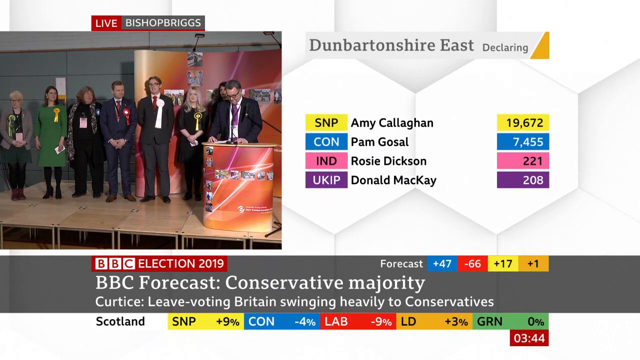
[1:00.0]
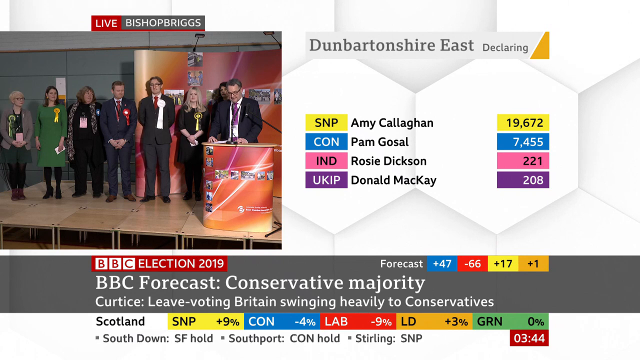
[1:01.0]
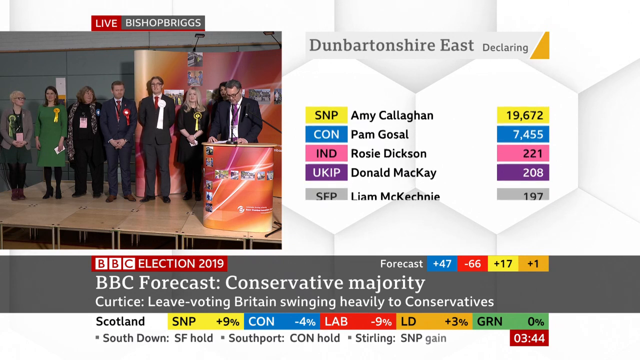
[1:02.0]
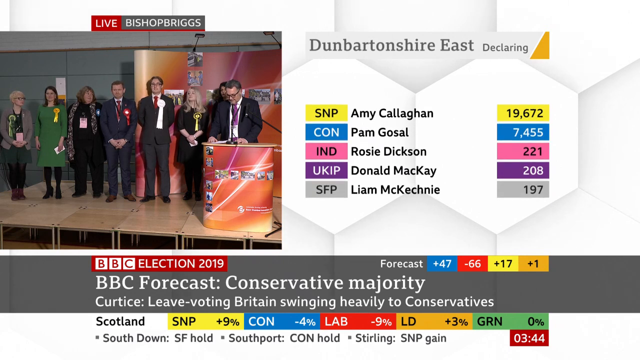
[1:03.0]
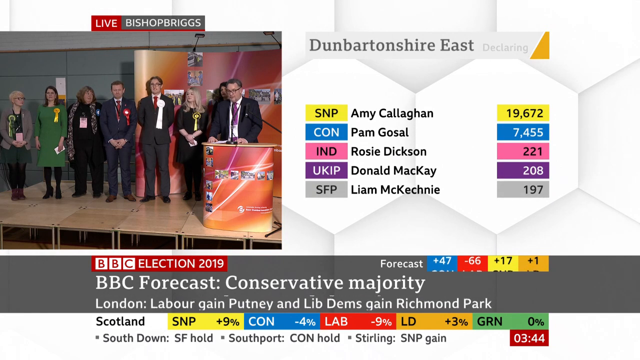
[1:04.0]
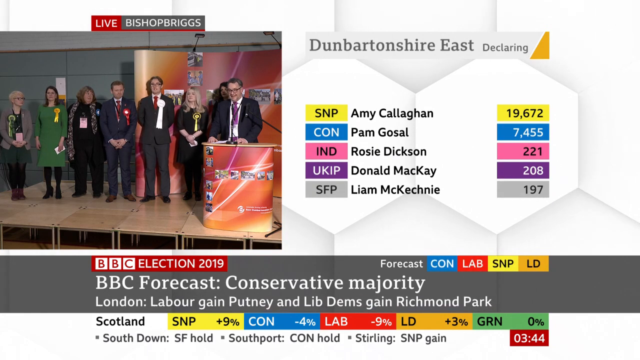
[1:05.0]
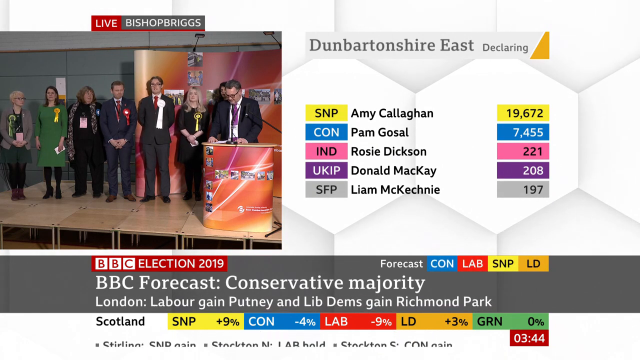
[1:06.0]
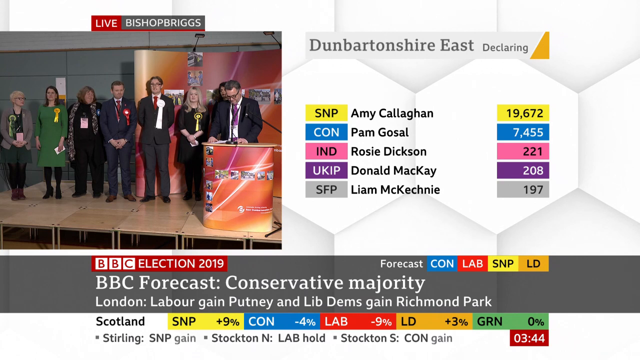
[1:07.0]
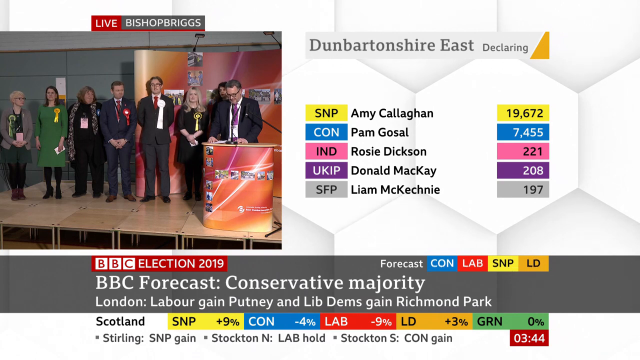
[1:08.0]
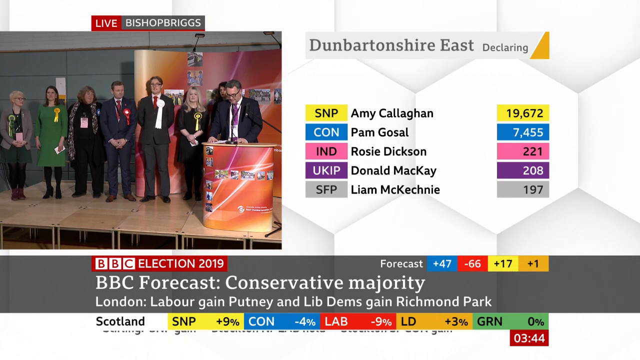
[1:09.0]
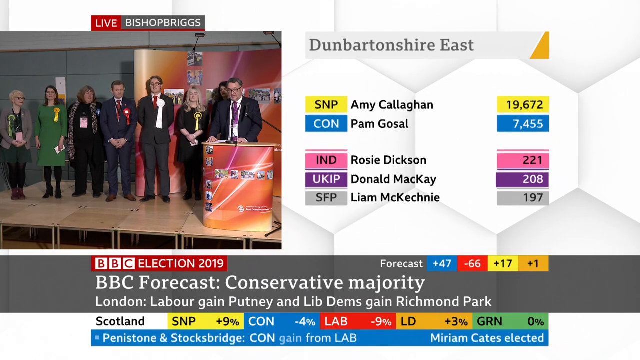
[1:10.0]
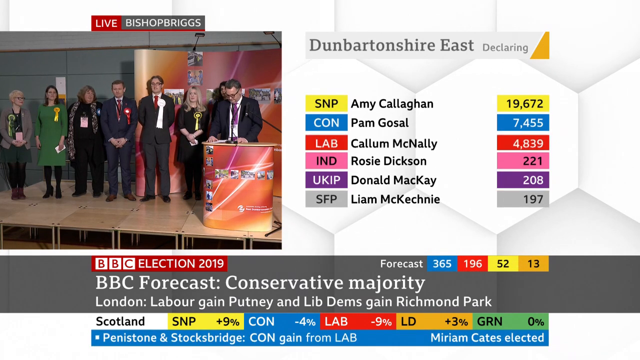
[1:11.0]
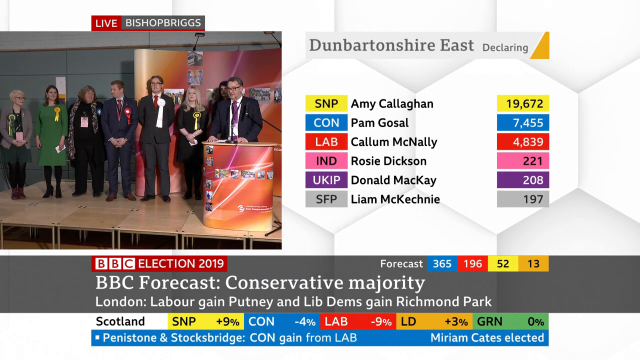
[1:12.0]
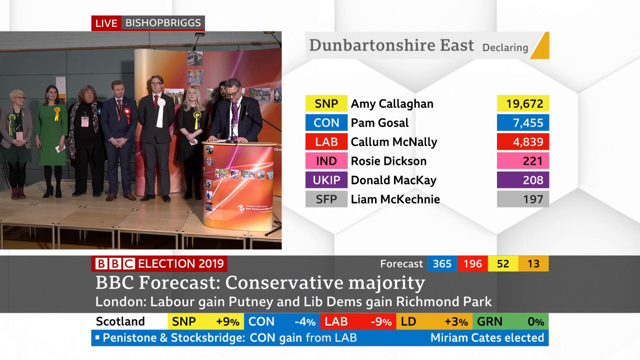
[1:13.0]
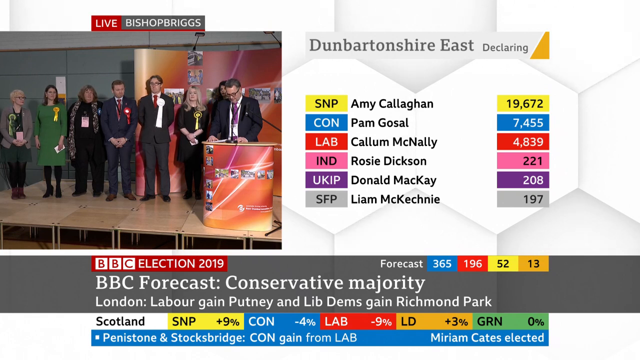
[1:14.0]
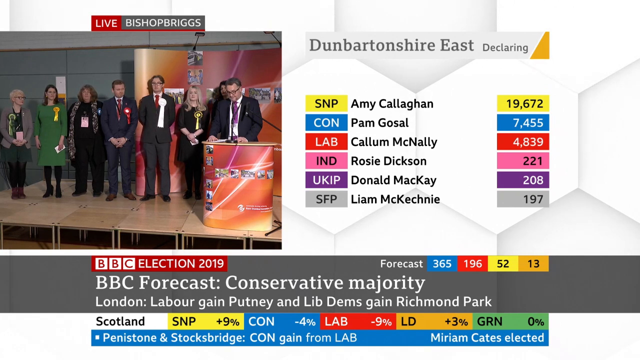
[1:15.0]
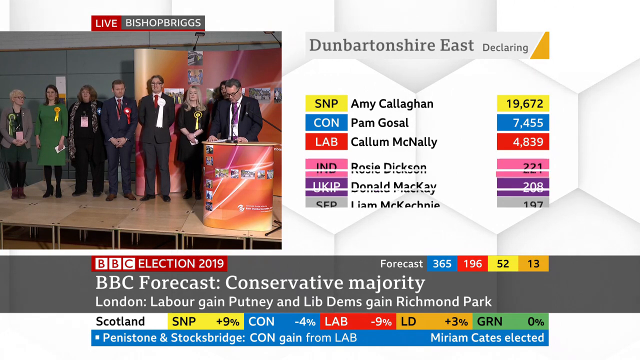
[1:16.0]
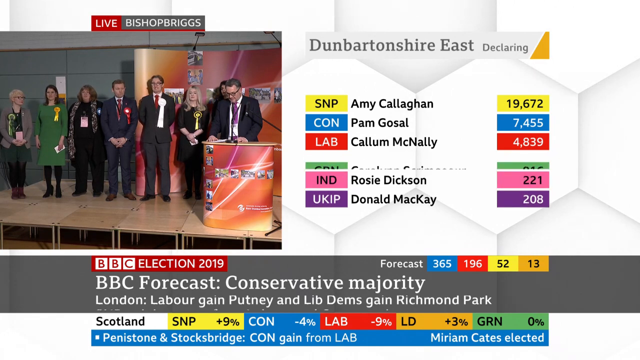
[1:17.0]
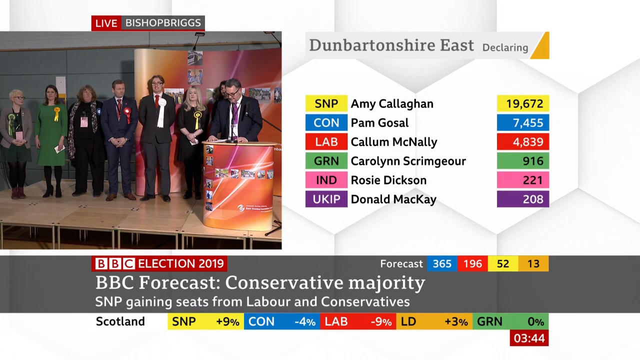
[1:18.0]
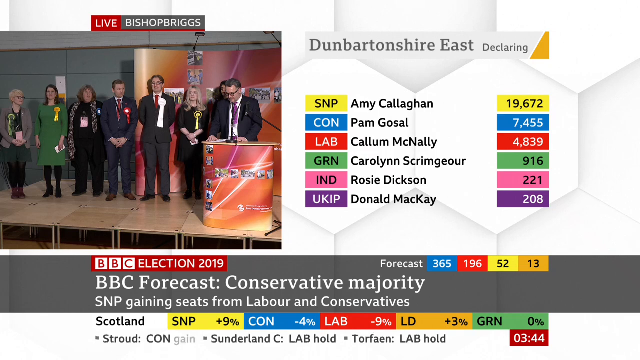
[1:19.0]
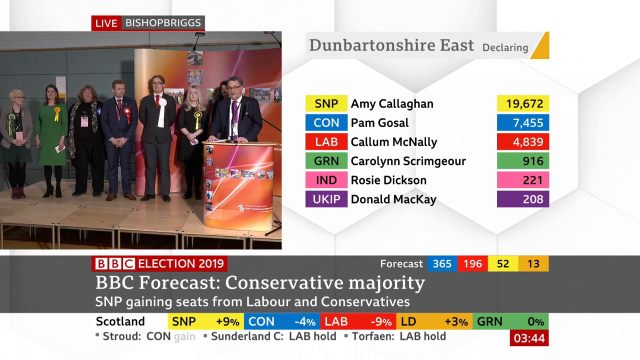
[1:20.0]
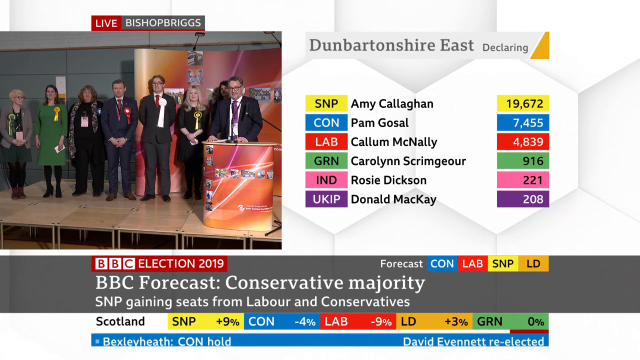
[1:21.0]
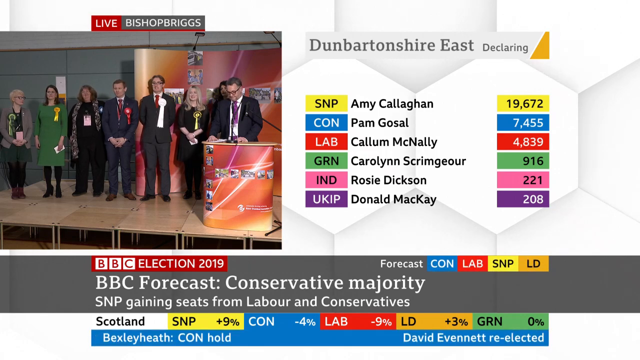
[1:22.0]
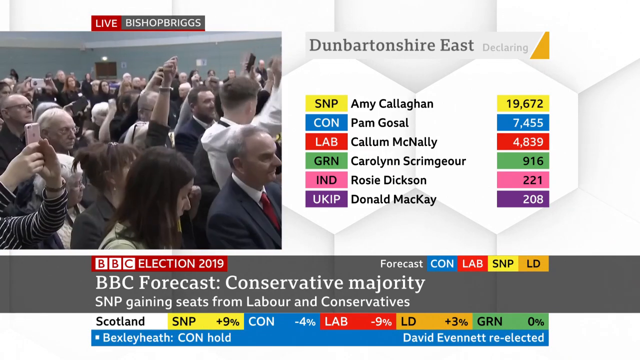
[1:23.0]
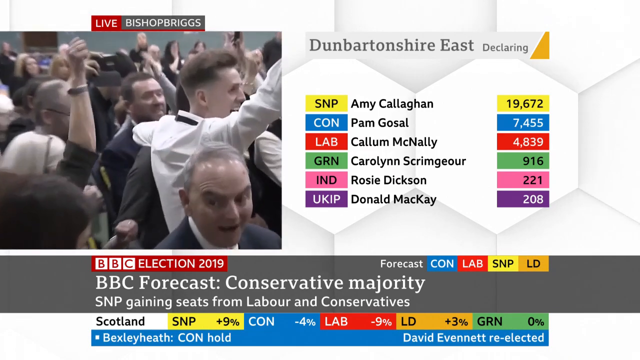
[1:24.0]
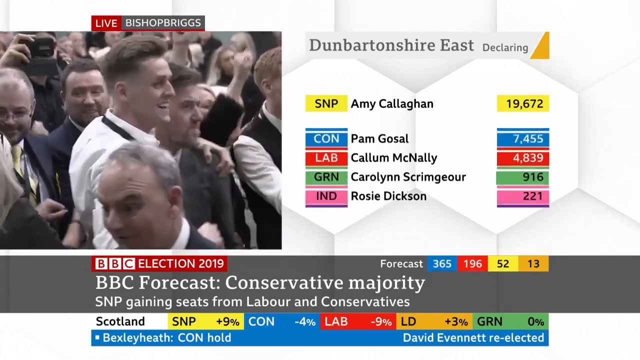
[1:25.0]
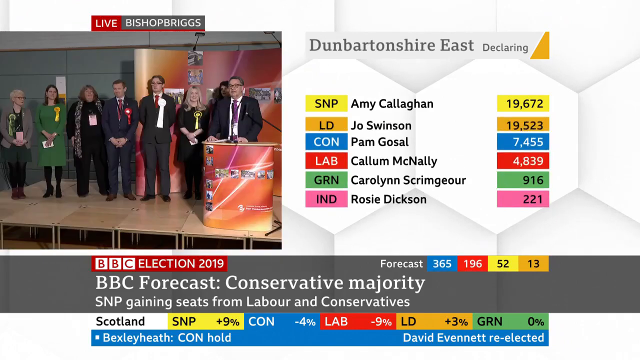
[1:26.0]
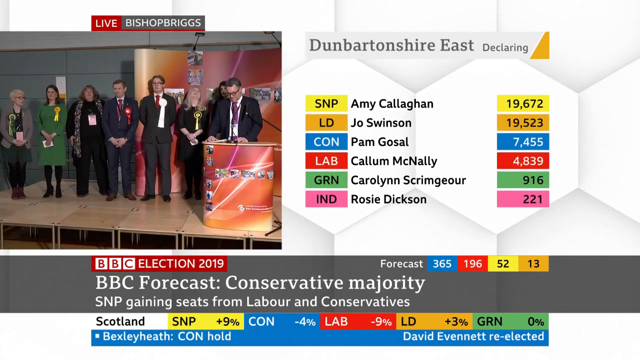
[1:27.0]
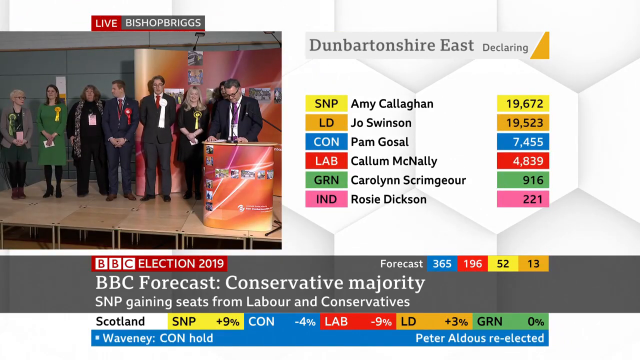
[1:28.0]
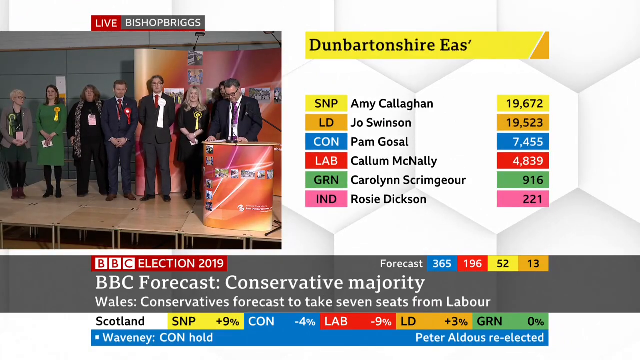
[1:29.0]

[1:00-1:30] Underneath, in light gray, the name "Liam McKechnie" appears, with "SFP" in a light gray box to the left and the number "197". In a red box, "Kellum McNally" is shown, with "LAB" to the left in the red box and the number "4839". Next comes "GRN" with "Carolyn Scrimgeour" and the number "916". Then "Jo Swinson" appears in gold, with "LD" in the rectangle to the left and "19,523" to the right. While the results update, the people remain standing on the stage wearing their ribbons, some of which match the colors of the parties shown, and the speaker at the podium is still speaking.